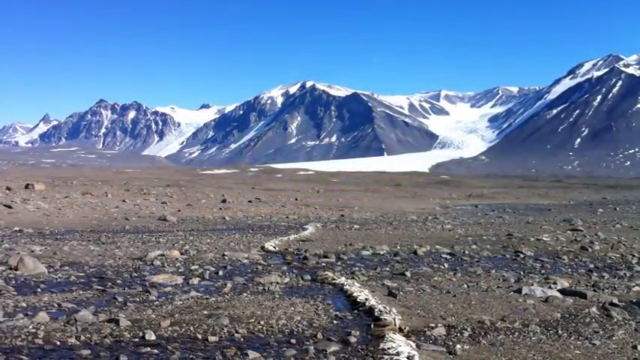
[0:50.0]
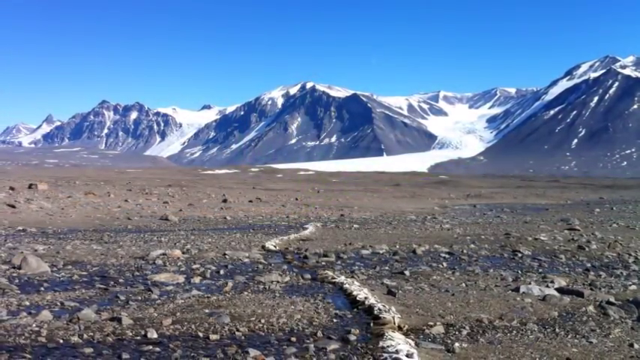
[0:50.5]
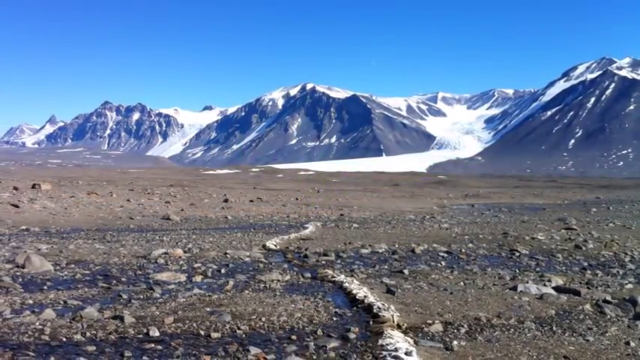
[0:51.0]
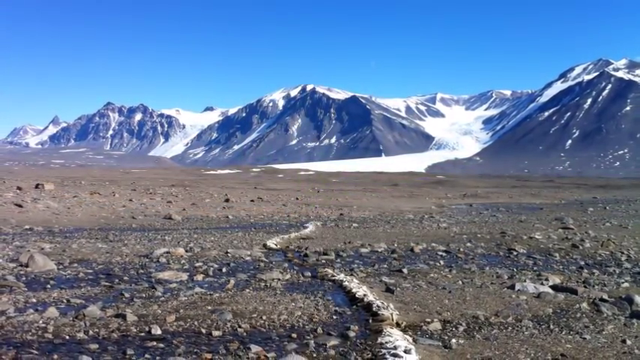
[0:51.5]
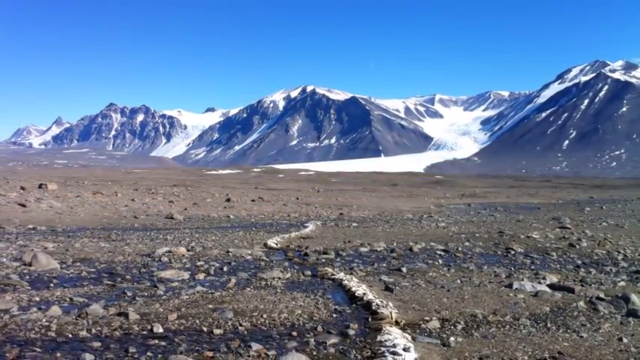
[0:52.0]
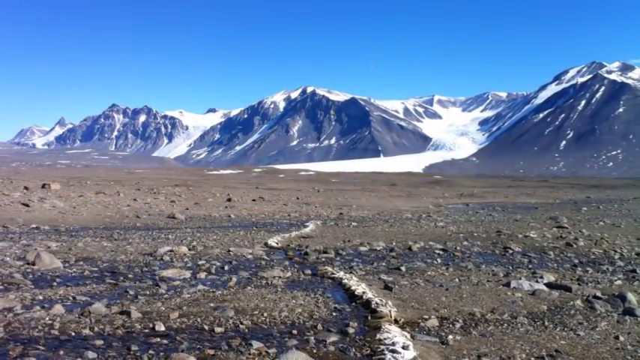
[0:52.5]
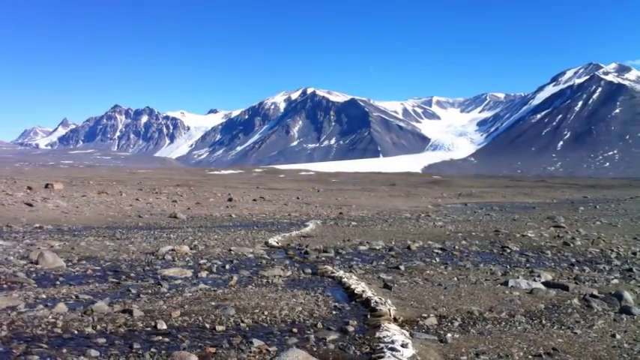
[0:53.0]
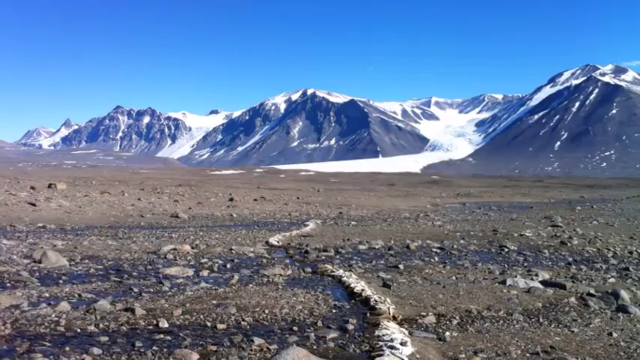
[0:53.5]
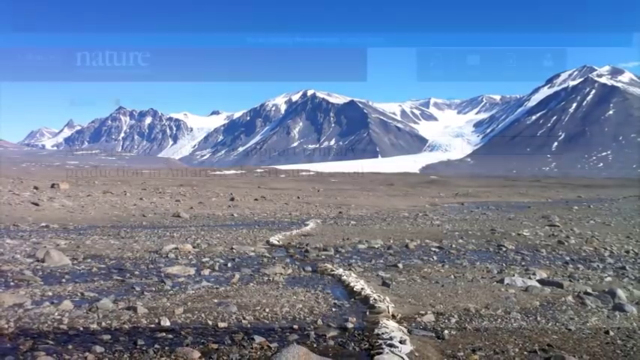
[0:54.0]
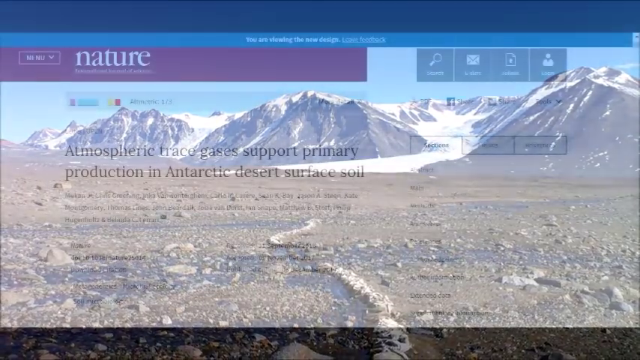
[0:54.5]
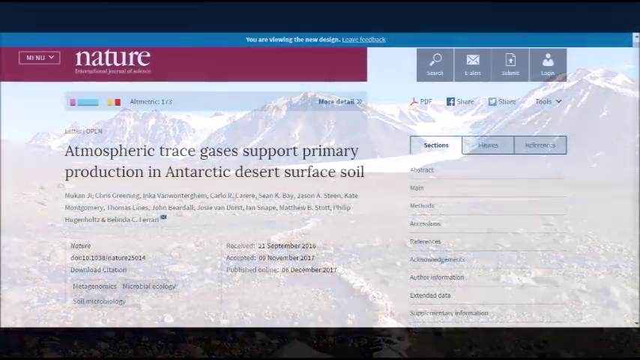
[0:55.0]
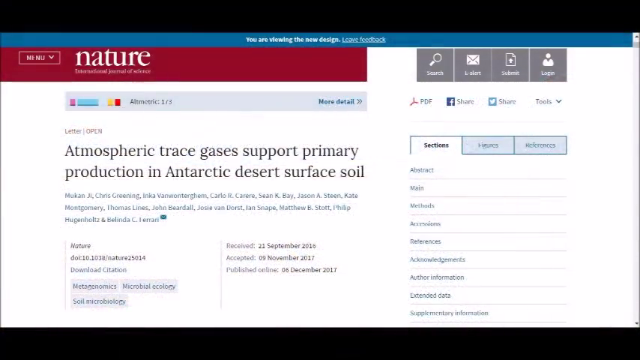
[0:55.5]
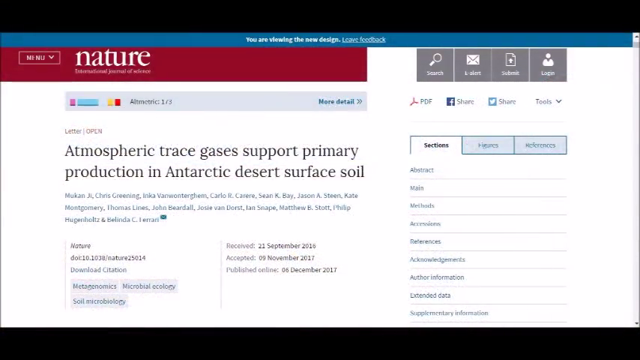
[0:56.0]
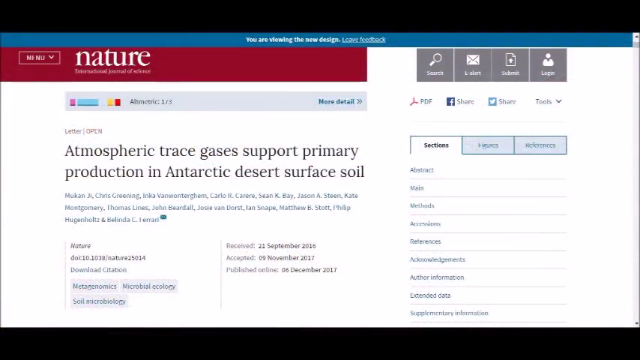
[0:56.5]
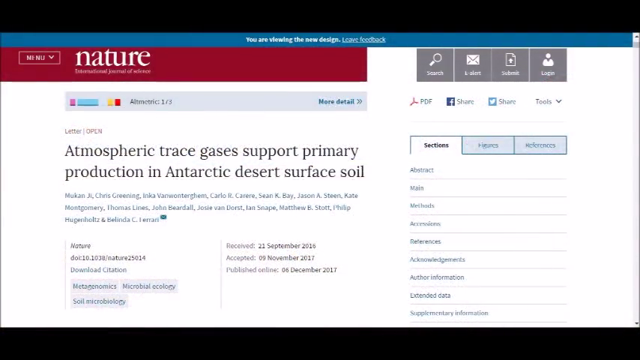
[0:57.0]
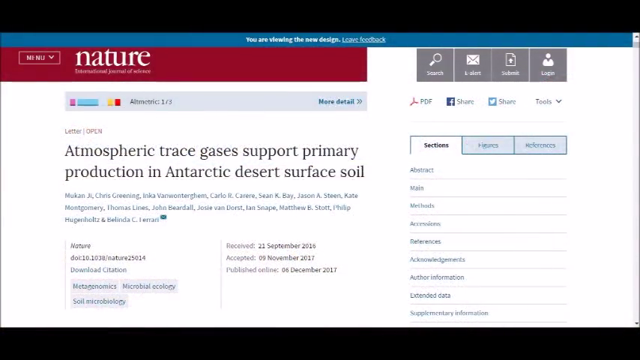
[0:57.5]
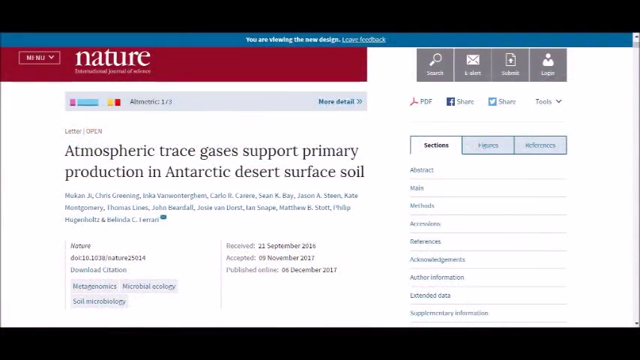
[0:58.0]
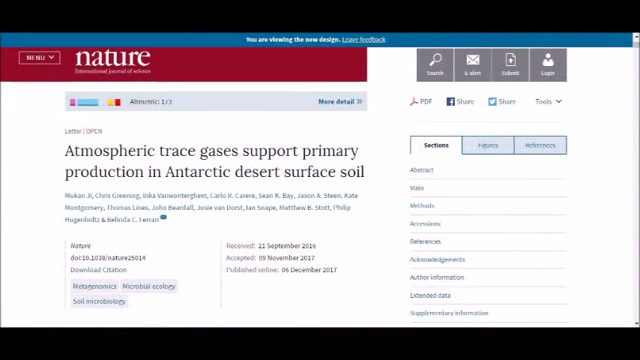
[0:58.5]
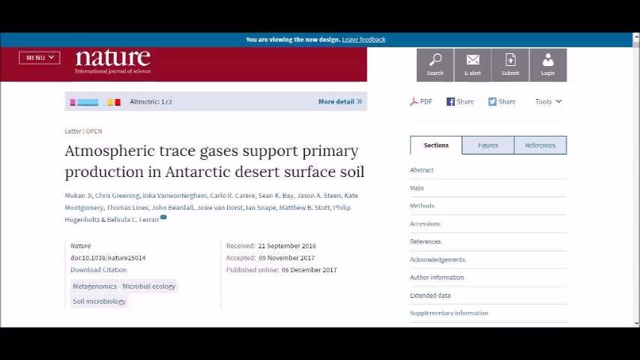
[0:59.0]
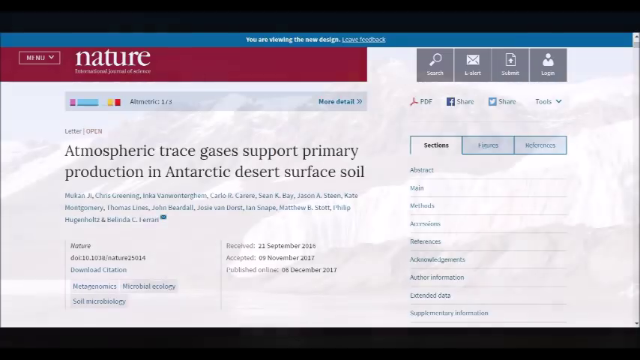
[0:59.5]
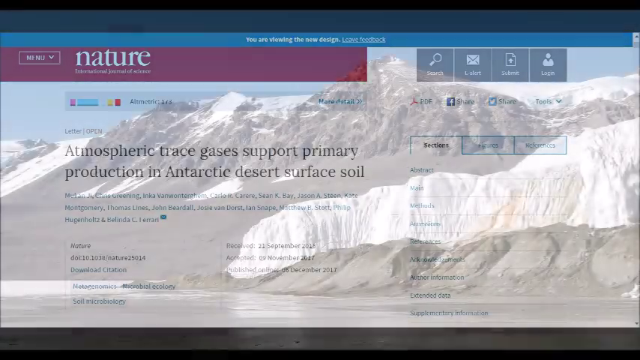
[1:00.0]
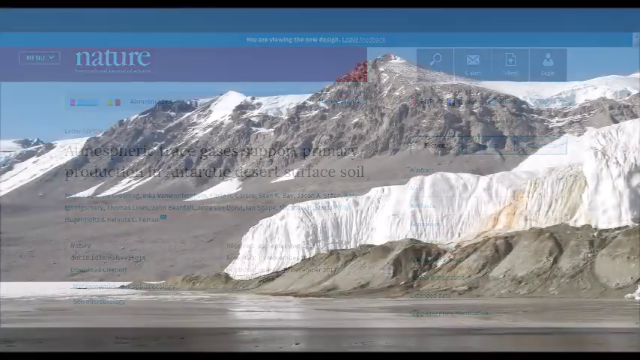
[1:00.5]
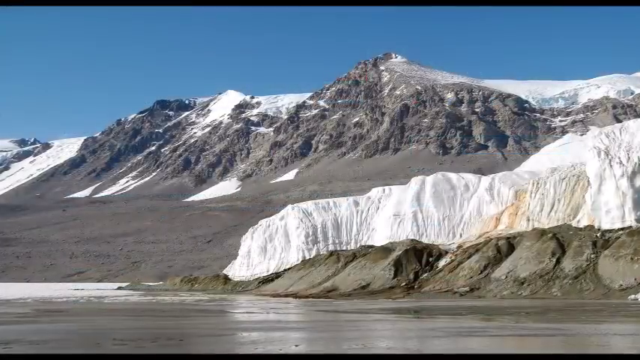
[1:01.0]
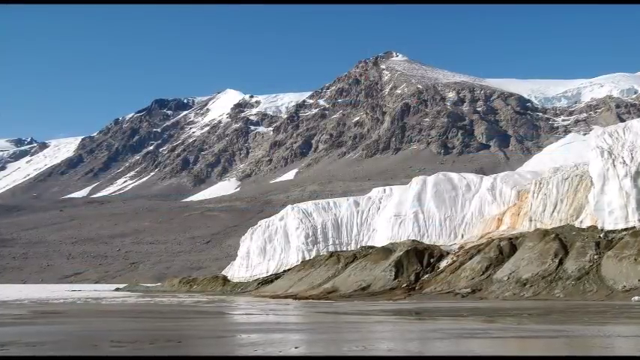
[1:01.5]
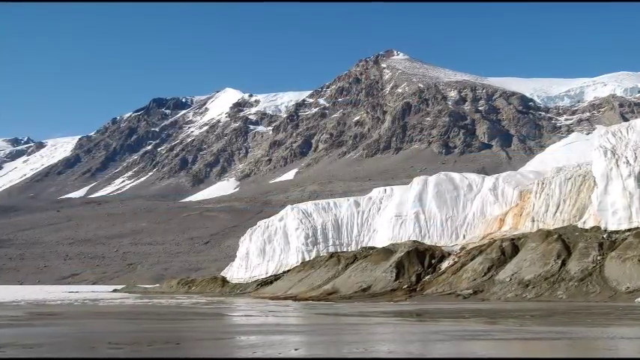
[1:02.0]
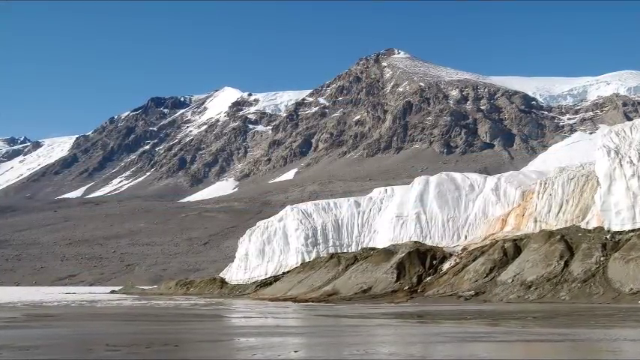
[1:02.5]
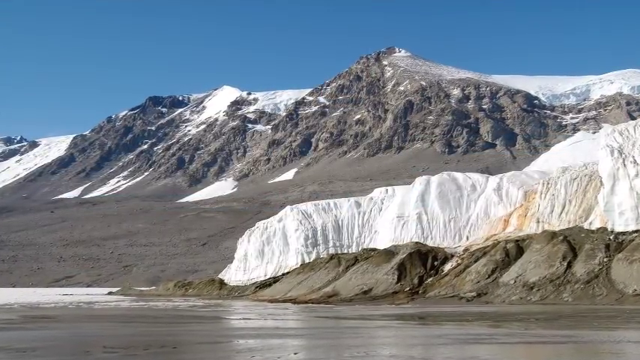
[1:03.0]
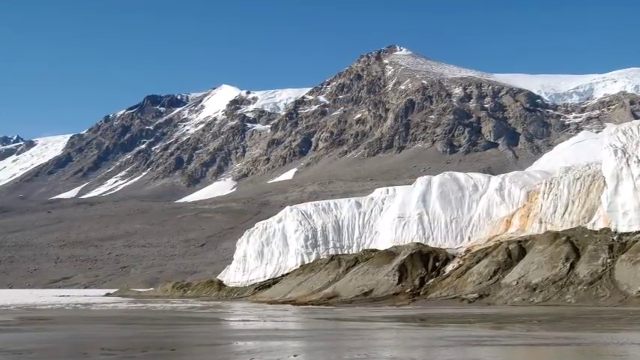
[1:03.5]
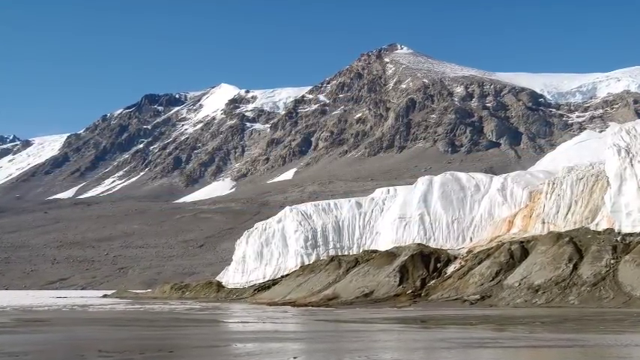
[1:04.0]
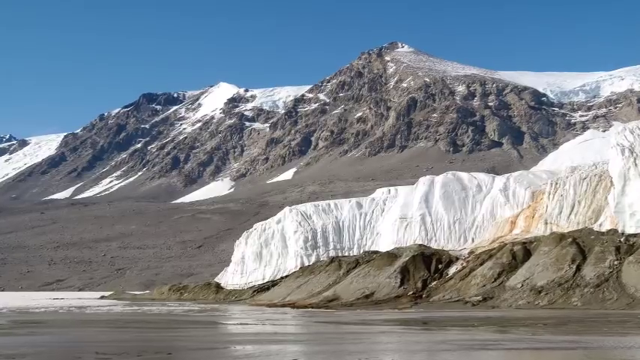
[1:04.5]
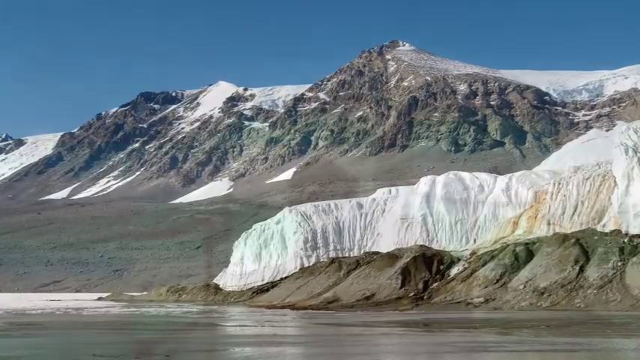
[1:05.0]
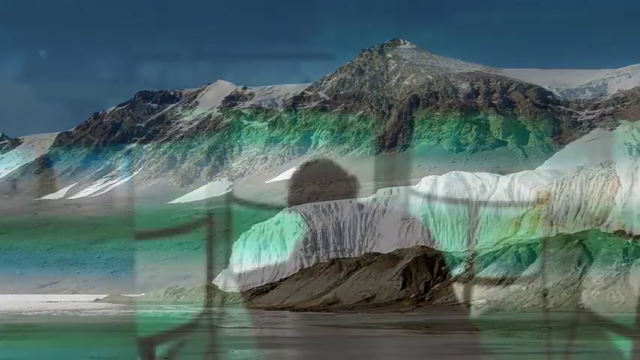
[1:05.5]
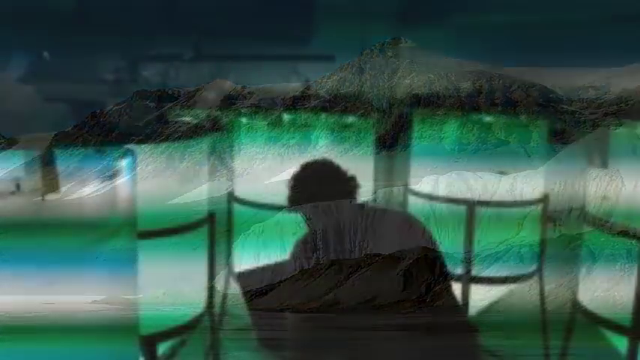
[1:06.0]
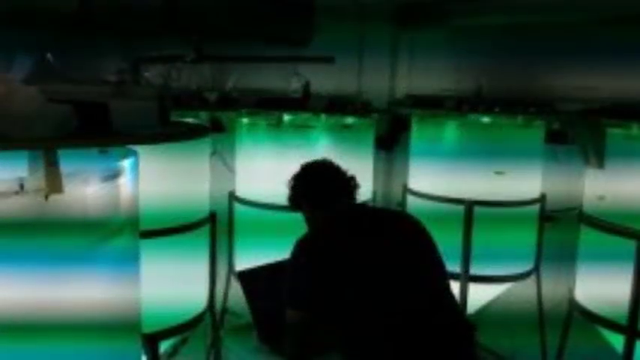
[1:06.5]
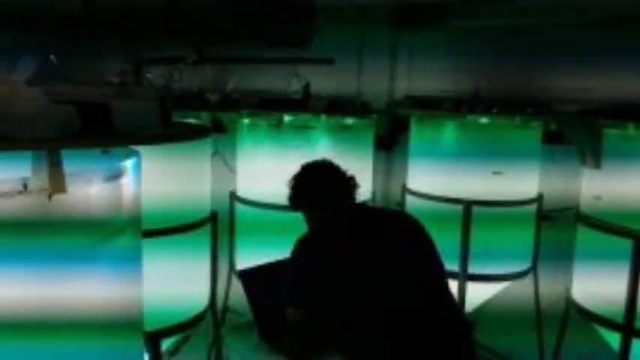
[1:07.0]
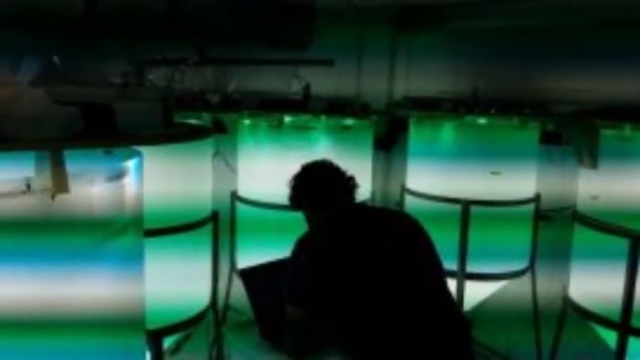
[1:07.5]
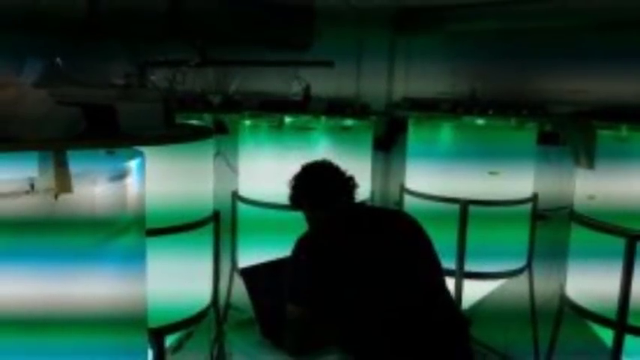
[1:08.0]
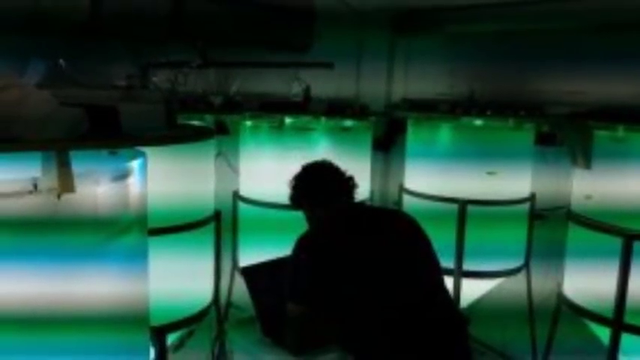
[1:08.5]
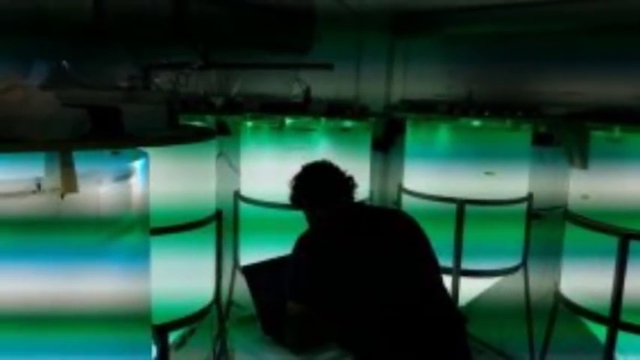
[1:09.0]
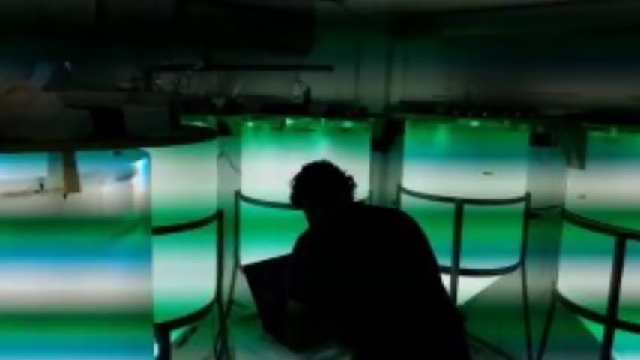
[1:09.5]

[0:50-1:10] A view stretches from a field of stones and hard ground to gray mountains covered in snow. An article from the Nature website appears, titled "atmospheric trace gases support primary production in Antarctic desert surface," a science article by Mukani and other researchers. More photos show mountains with ice on them. Then a picture shows a person working in a room with many green lights; the person is dark, in shadow, with only their hair visible.